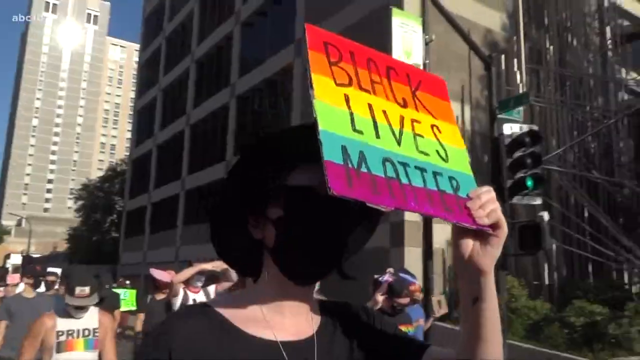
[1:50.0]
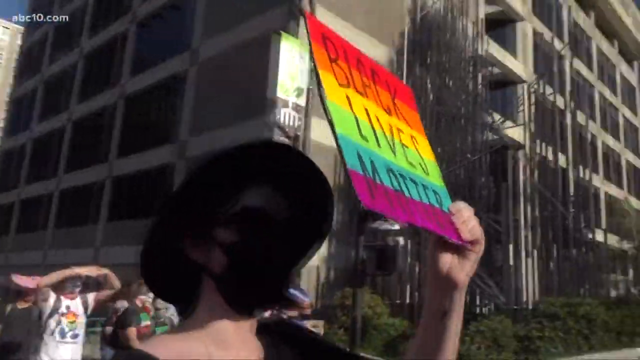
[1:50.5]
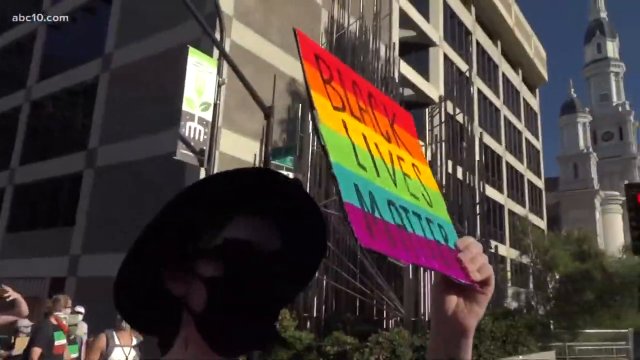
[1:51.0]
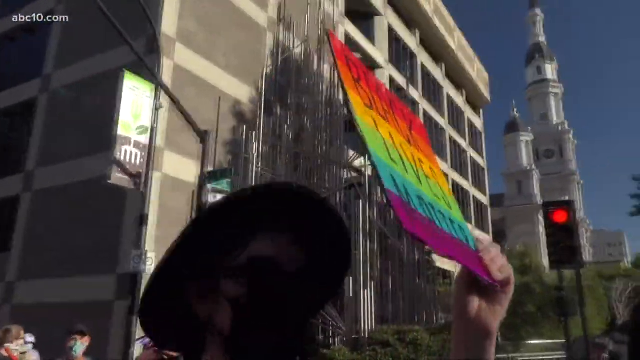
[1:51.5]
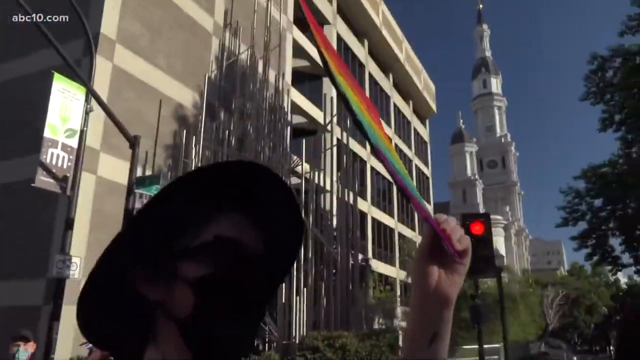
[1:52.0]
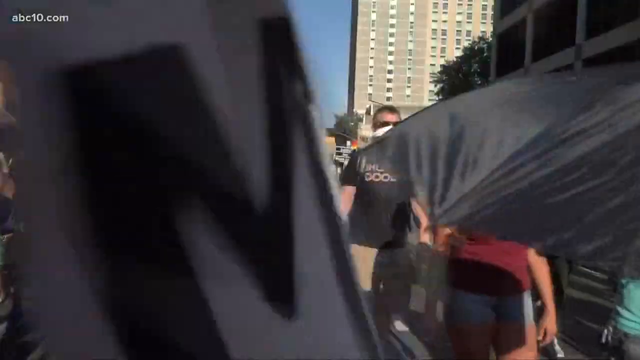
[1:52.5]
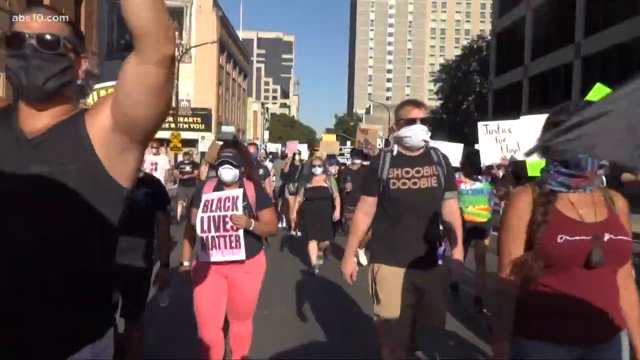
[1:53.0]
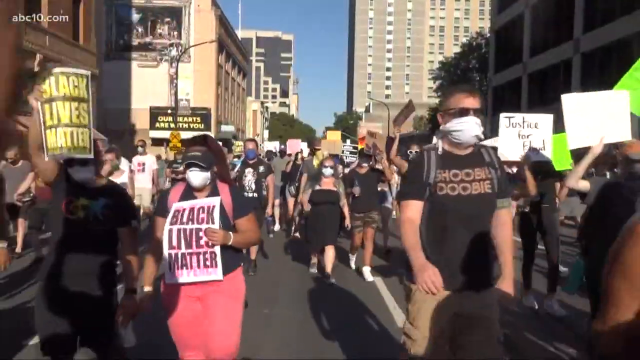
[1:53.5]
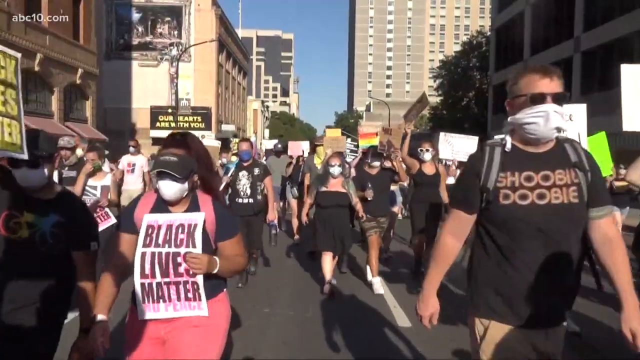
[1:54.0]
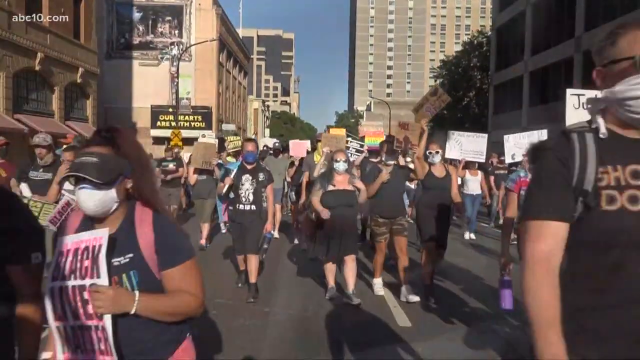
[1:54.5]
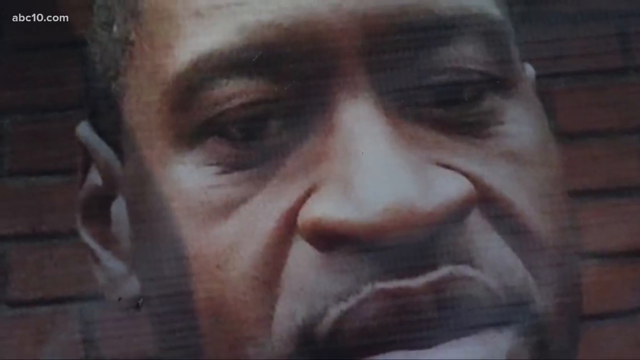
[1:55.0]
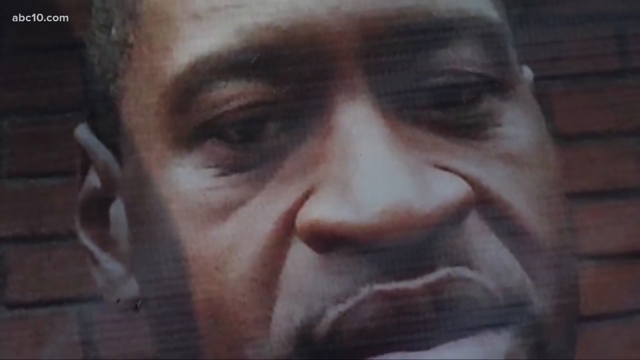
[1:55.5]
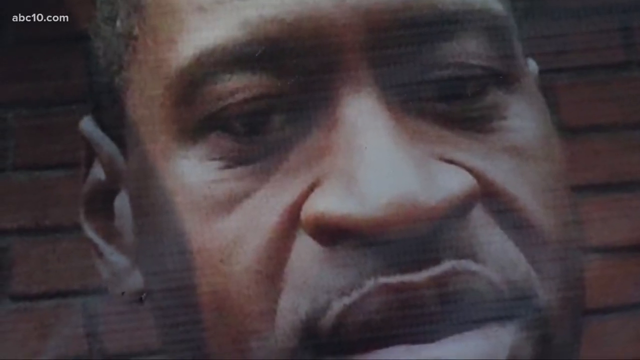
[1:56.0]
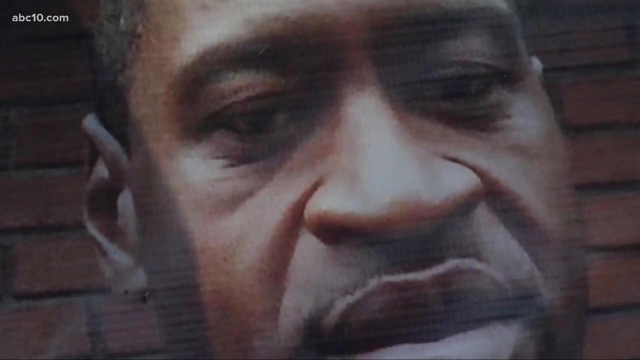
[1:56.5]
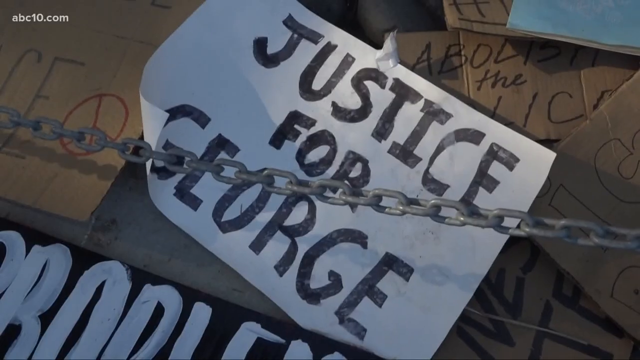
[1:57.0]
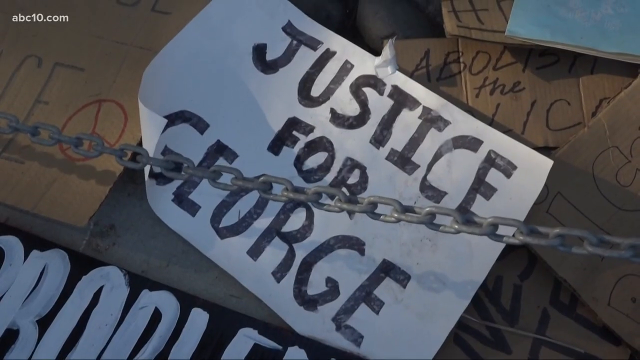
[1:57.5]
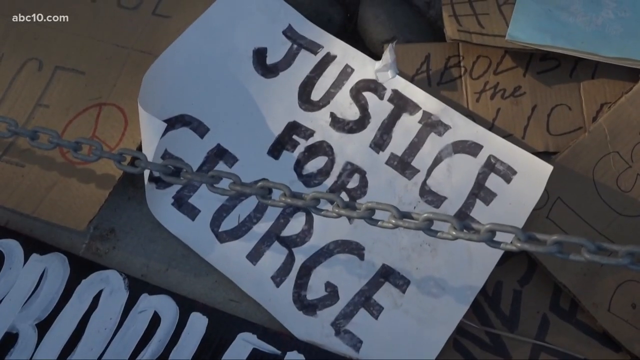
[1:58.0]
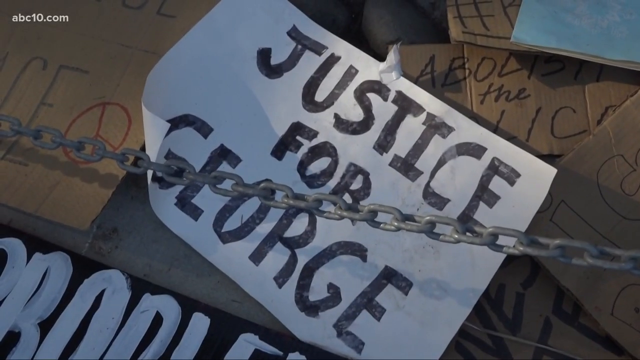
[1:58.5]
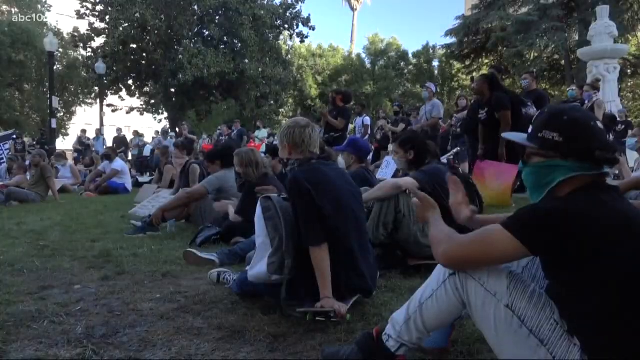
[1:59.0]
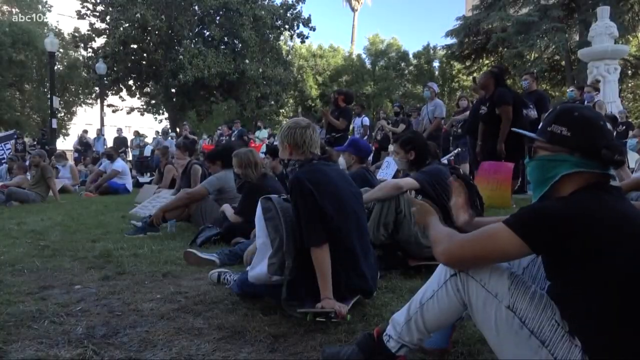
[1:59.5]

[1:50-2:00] More footage from the protest shows a person wearing a black mask, like a COVID mask, over their face and sunglasses; it seems to be a woman. She also wears a black hat and holds up a Black Lives Matter sign with kind of rainbow colors on the front, possibly using it to shield her face from the sun. The video cuts to more footage of what seems to be a Black Lives Matter protest, with a bunch of people walking toward the camera and past it on either side. They all wear COVID masks and sunglasses, and the sun looks quite bright. They keep marching past the camera. The video then cuts to an image of George Floyd, and then to some signs on the ground, one of which says "Justice for George".